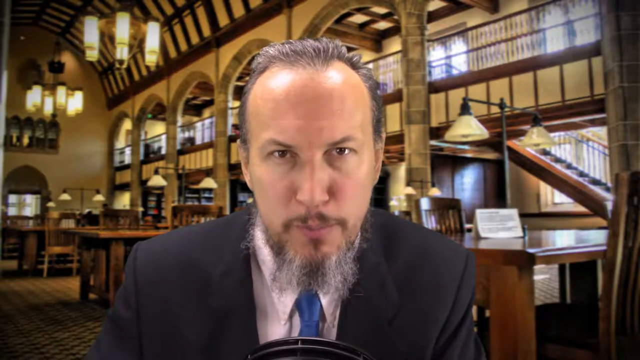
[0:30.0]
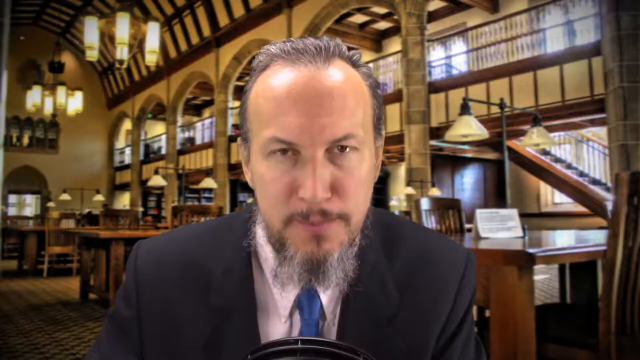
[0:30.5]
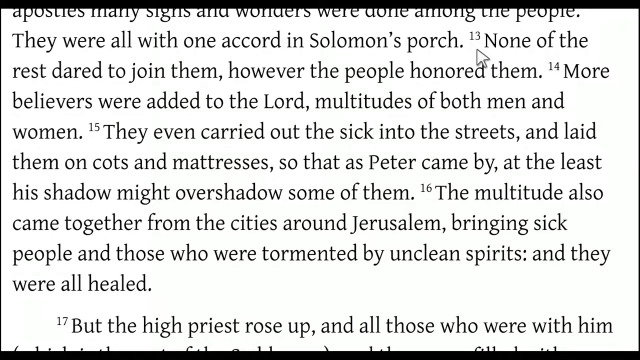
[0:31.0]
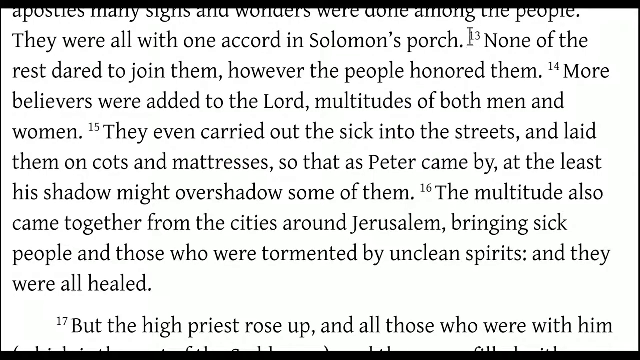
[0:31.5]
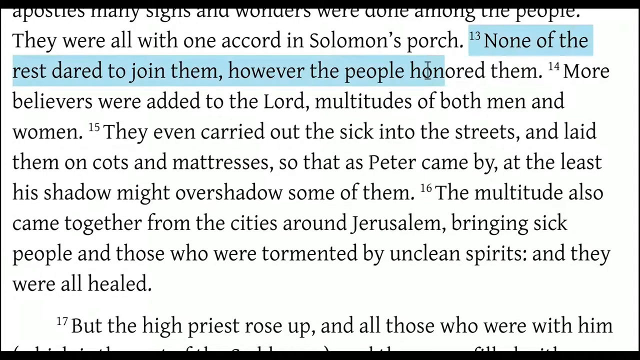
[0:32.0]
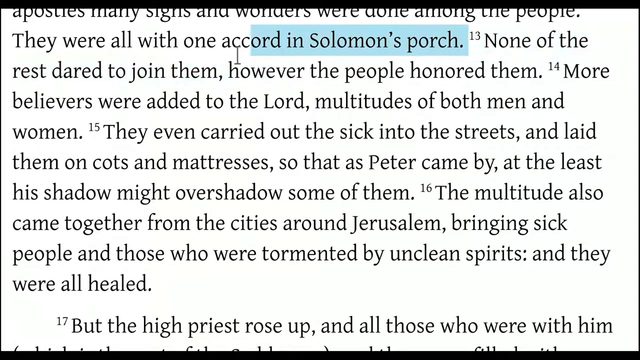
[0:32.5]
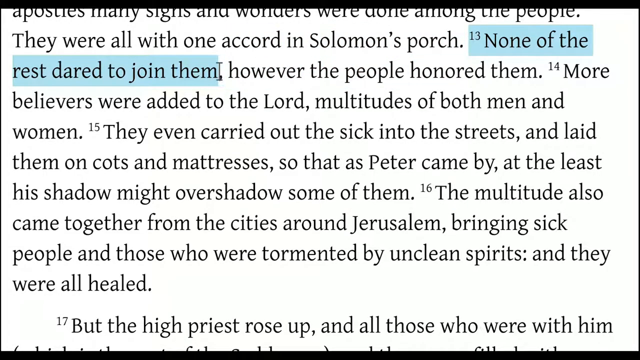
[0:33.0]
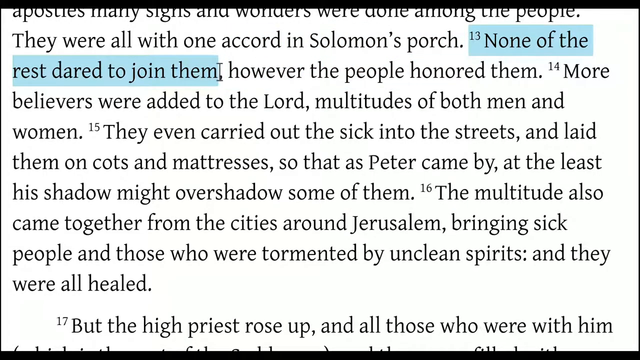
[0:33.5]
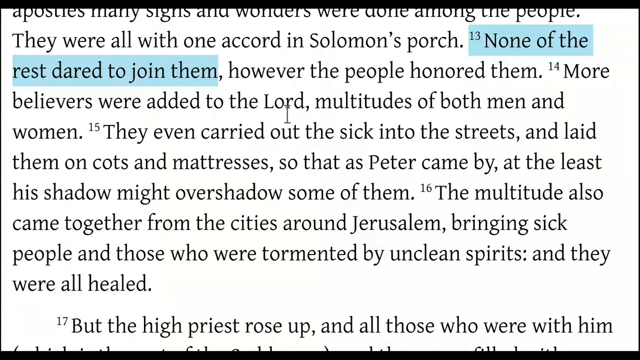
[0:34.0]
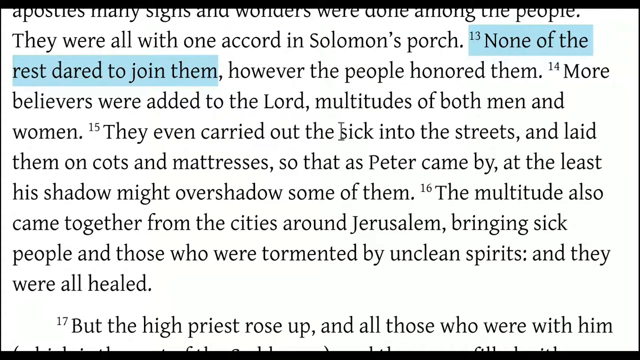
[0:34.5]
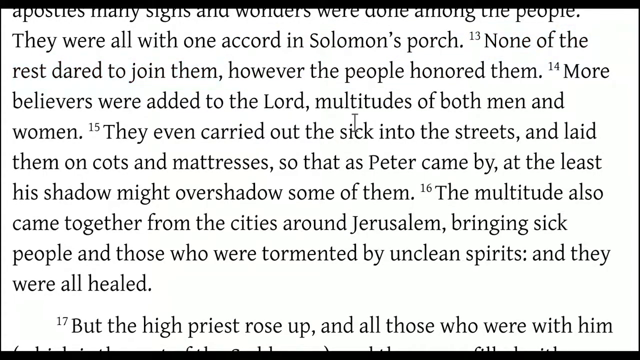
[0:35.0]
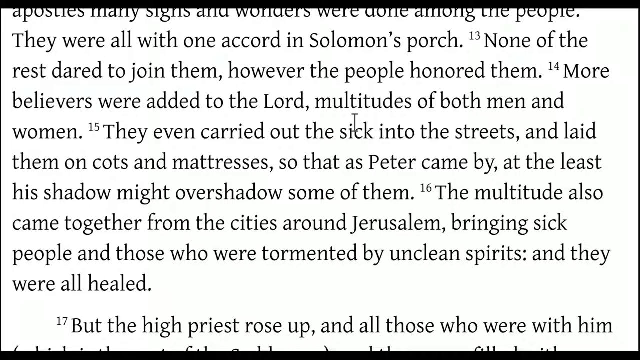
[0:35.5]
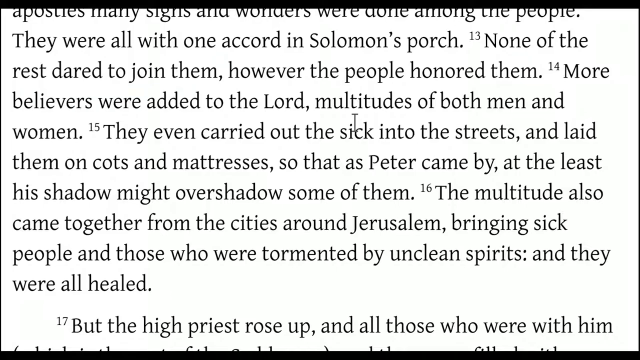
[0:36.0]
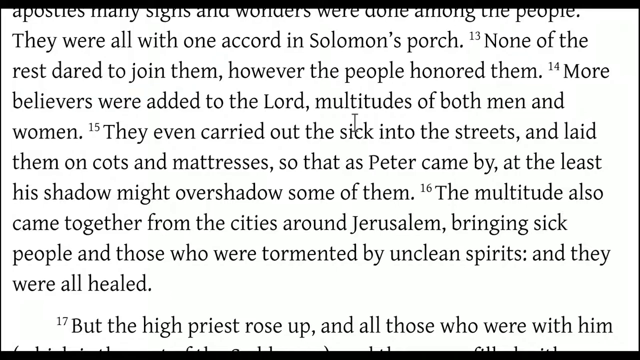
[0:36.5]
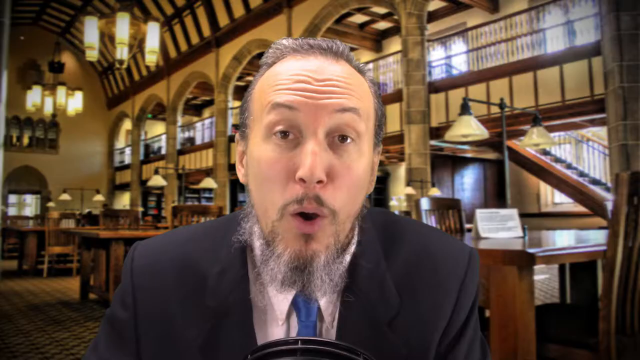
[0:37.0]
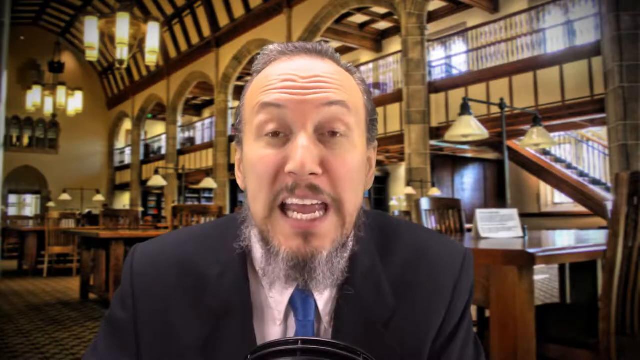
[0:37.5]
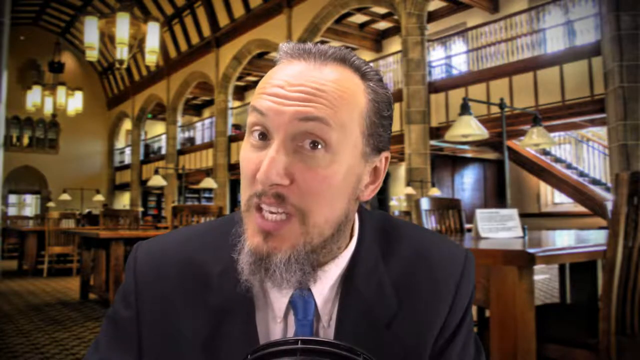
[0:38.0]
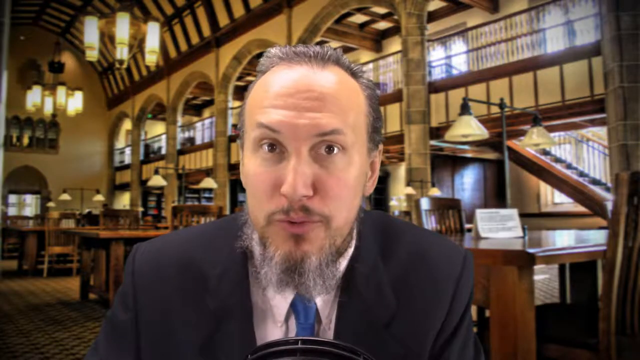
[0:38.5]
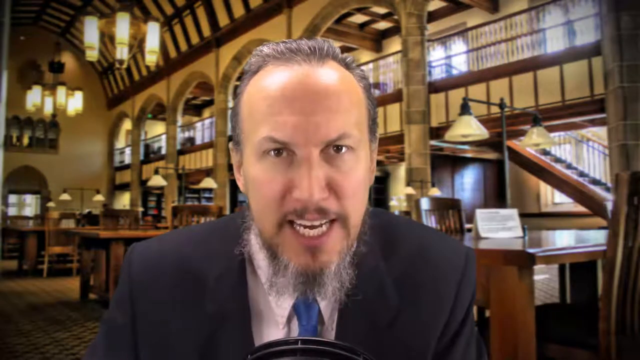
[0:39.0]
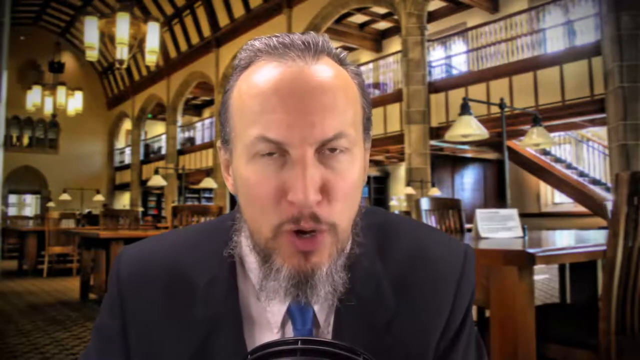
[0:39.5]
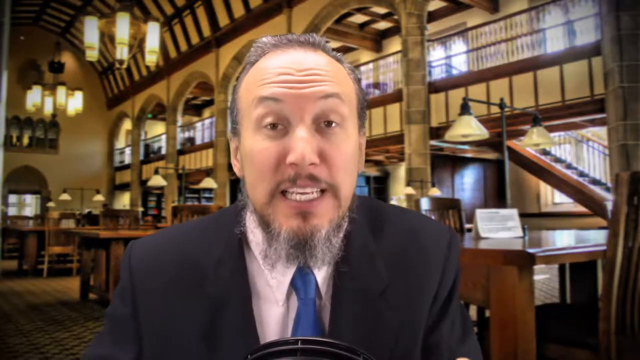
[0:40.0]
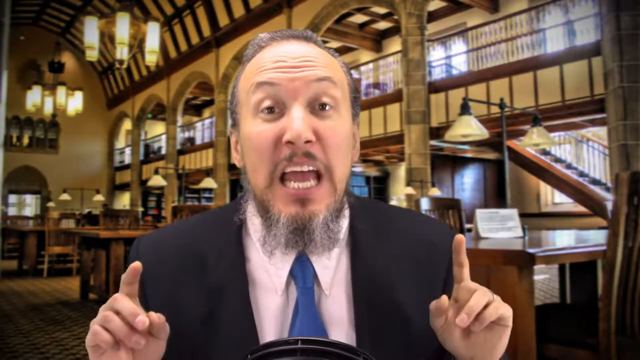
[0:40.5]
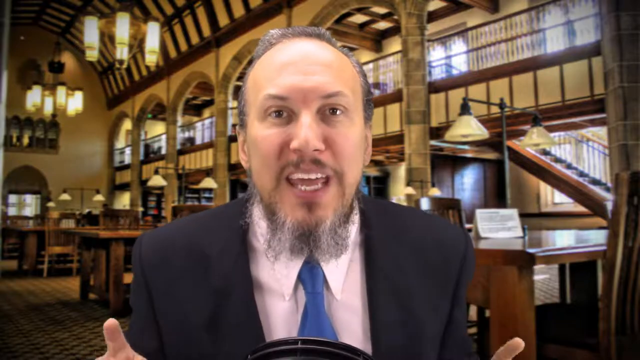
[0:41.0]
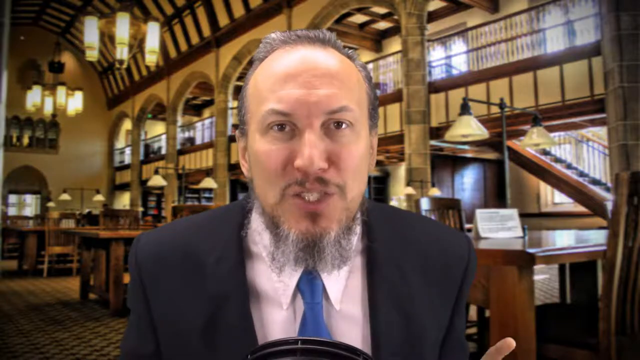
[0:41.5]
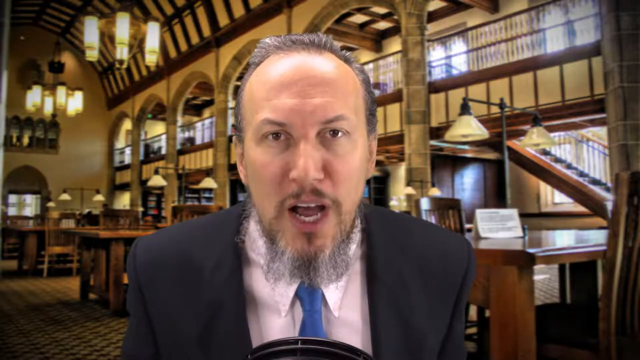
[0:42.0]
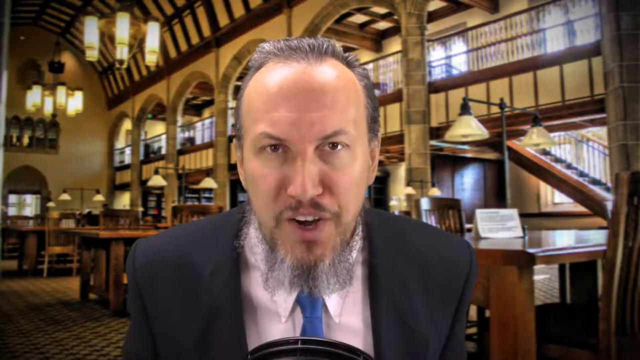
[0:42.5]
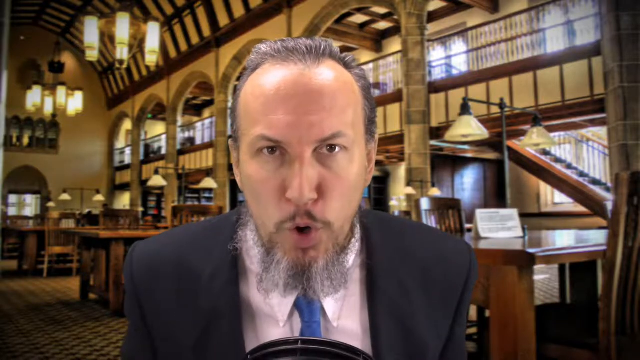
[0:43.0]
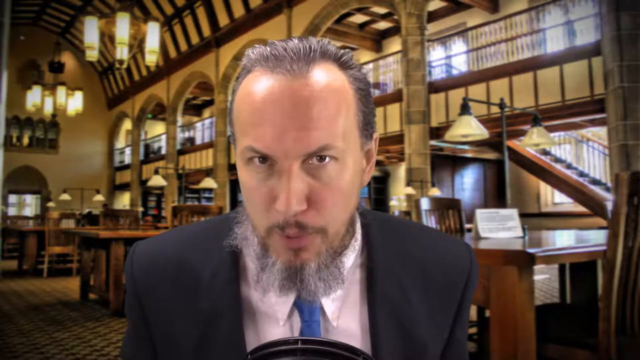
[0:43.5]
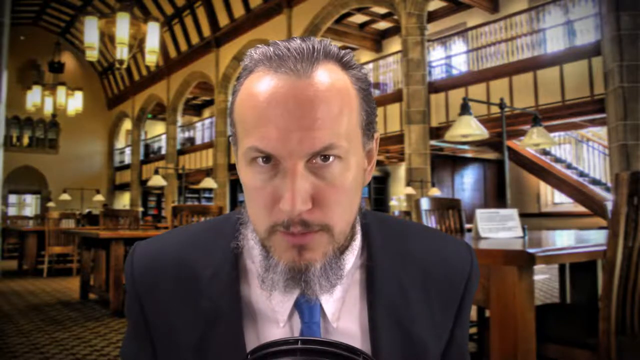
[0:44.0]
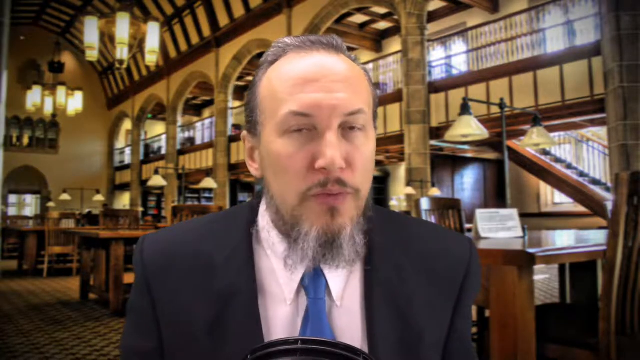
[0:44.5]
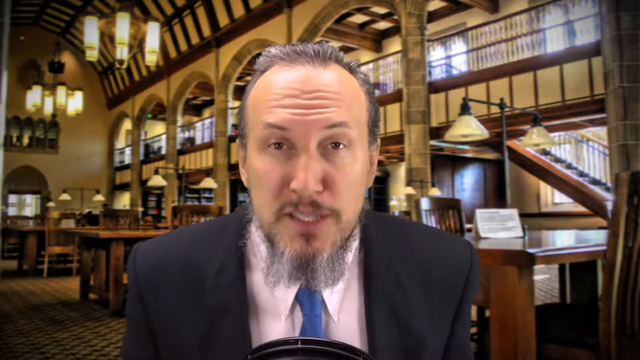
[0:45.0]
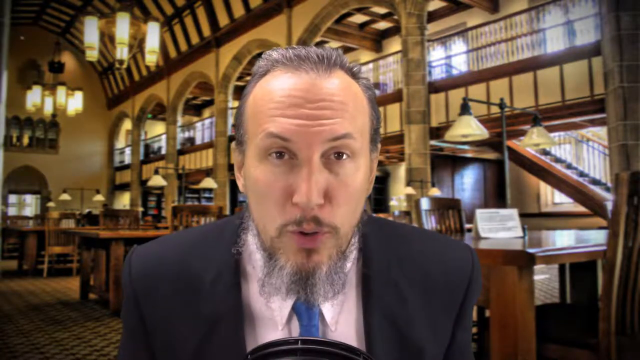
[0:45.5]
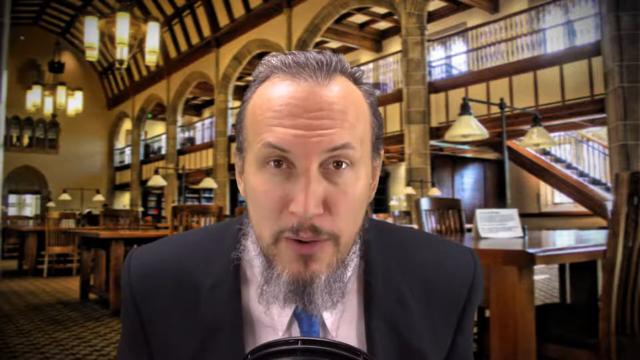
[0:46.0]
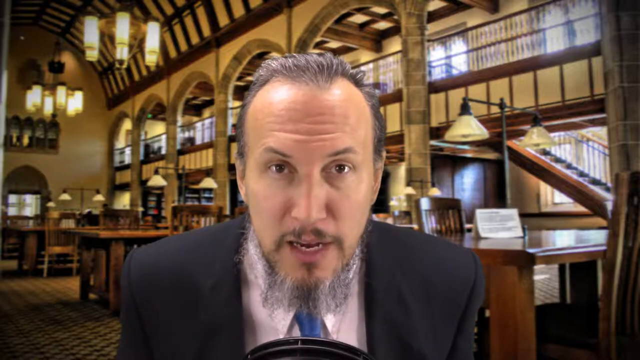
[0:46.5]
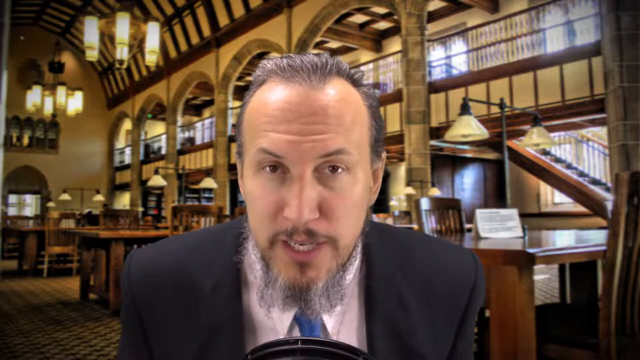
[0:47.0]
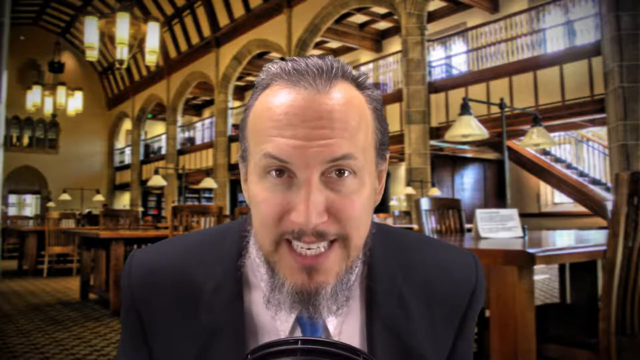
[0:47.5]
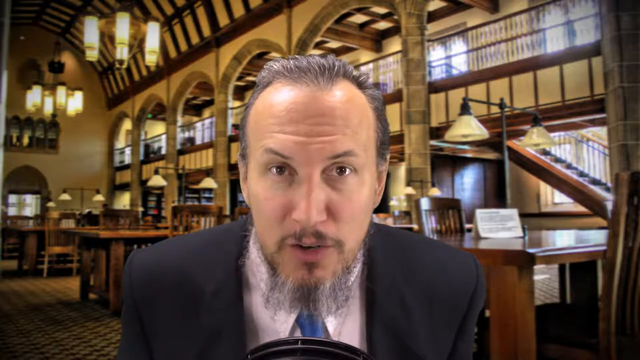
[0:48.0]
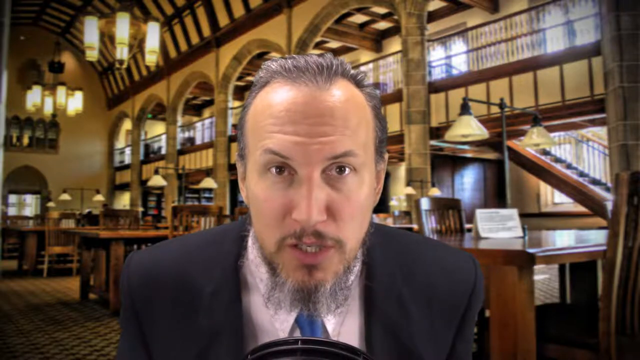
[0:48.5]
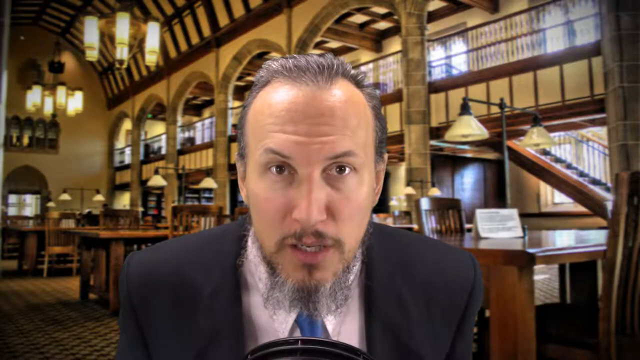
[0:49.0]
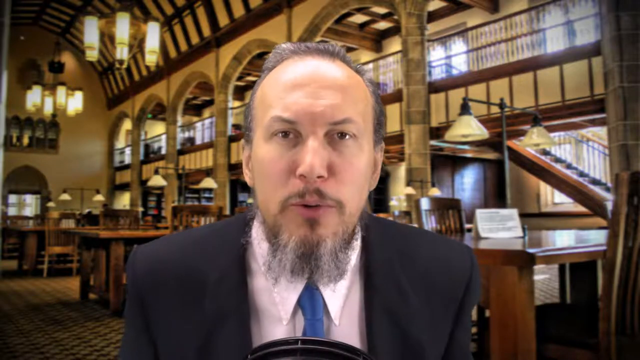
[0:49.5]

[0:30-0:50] A man of approximately late 40s, perhaps early 50s, is seen from the shoulders up, wearing a dark suit, a light collared shirt and a dark tie. His face is very intense as he focuses on speaking to the camera; he has fair Caucasian skin, brown eyes, salt-and-pepper hair and a goatee. Behind him, the two-story library has cathedral-like openings on the second floor with a balcony railing. The room's colors are gold with dark brown wood accents, and there are large tables behind him, suggesting a study area. As he speaks, the video switches to text inside a book: black text on a white background with one sentence highlighted in light blue. A footnote of 12 in the upper left corner is followed by the line "by the hands of the apostles, many signs and wonders were done among the people."